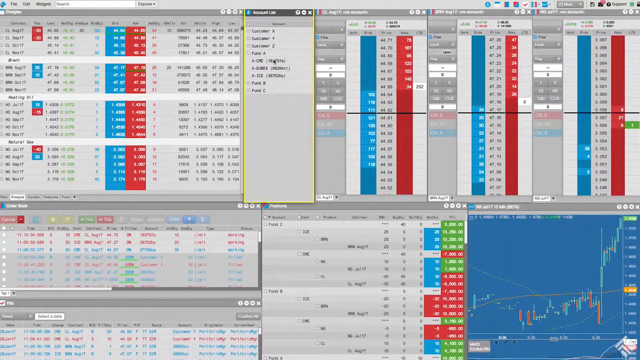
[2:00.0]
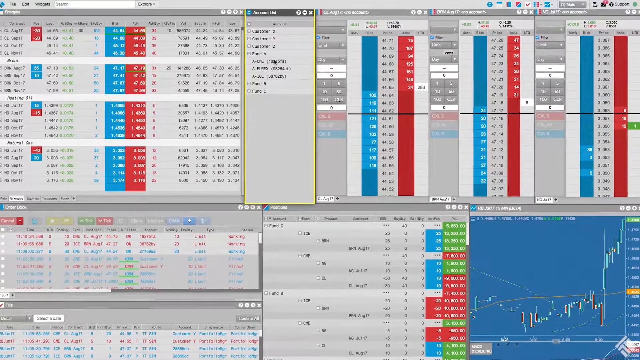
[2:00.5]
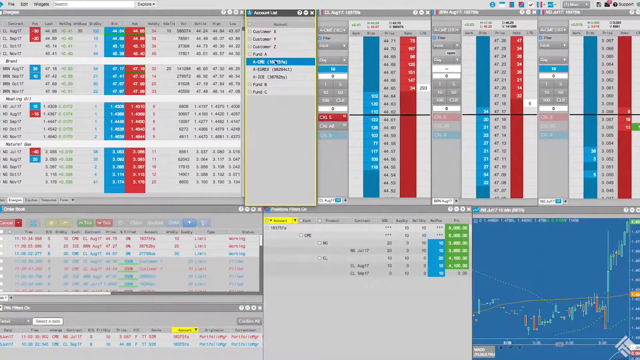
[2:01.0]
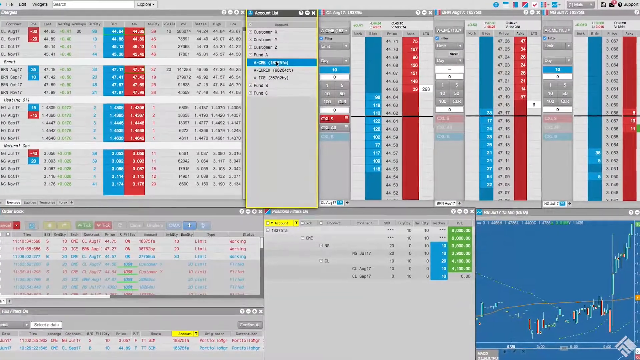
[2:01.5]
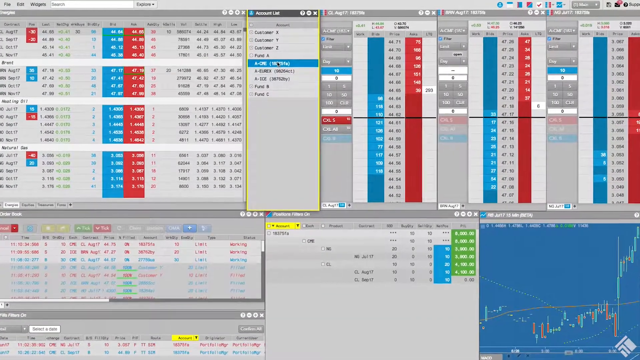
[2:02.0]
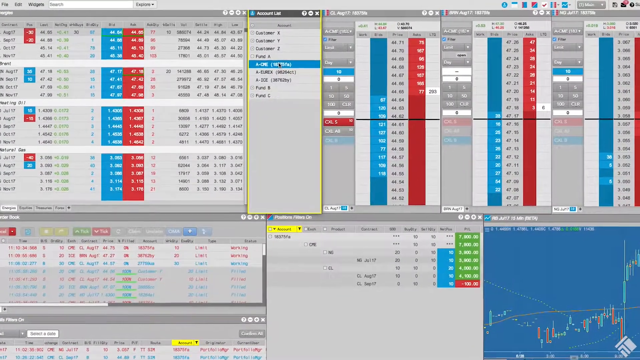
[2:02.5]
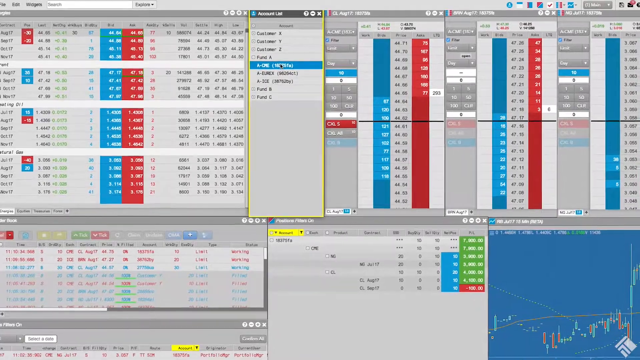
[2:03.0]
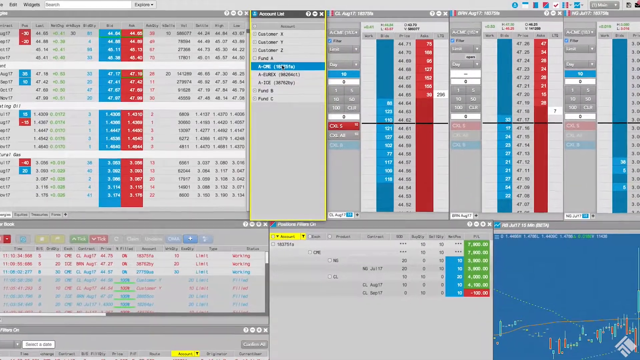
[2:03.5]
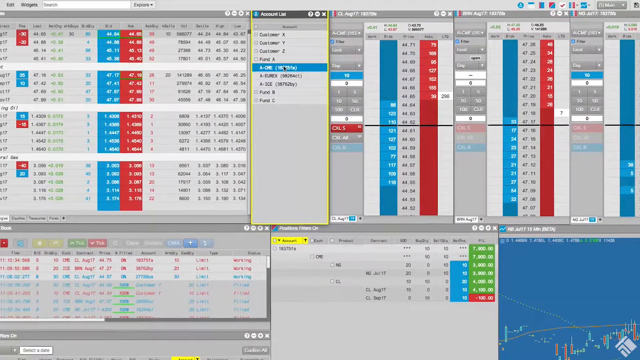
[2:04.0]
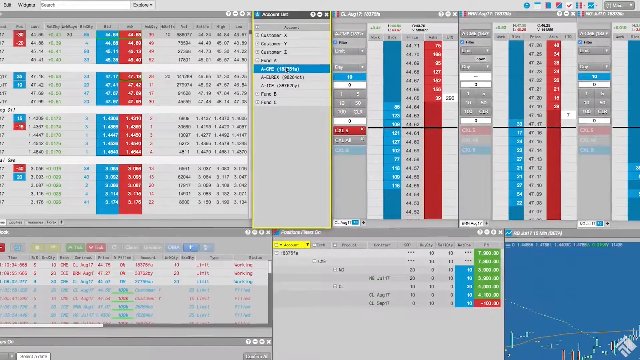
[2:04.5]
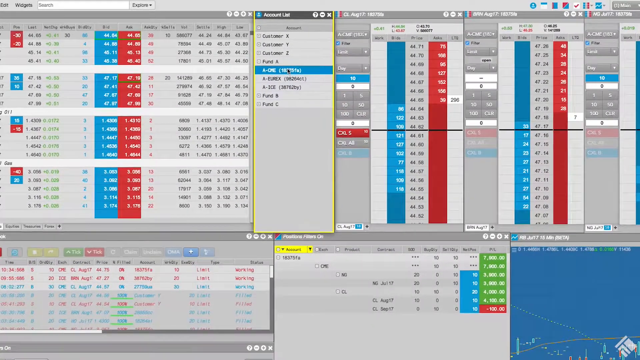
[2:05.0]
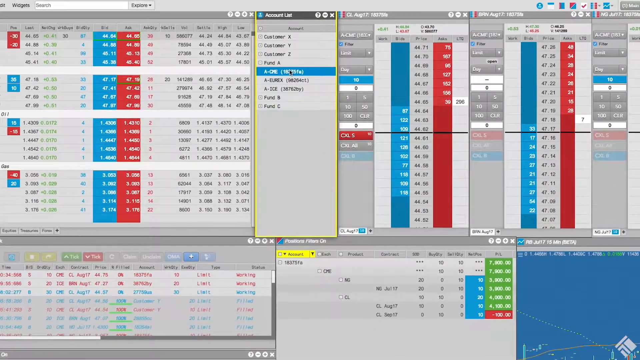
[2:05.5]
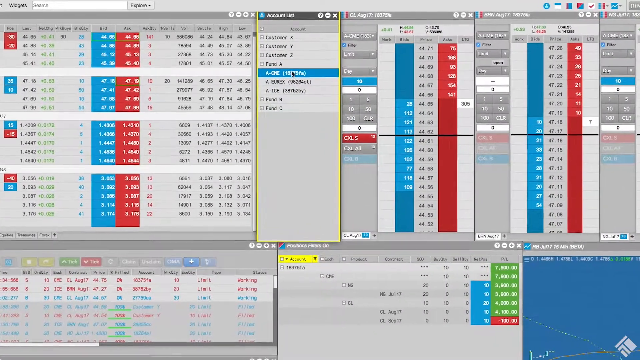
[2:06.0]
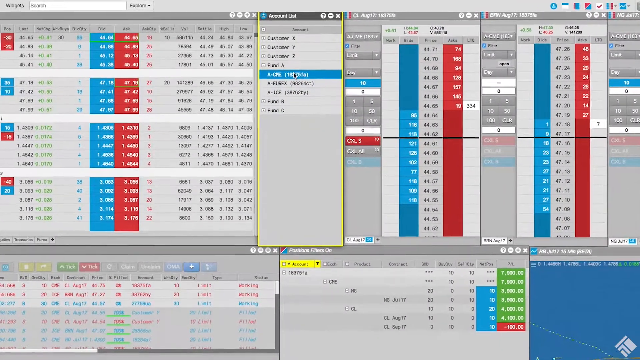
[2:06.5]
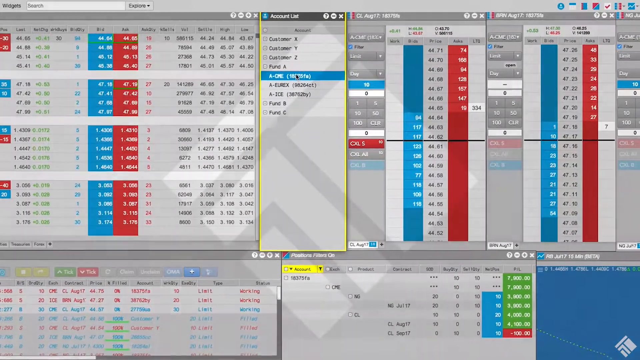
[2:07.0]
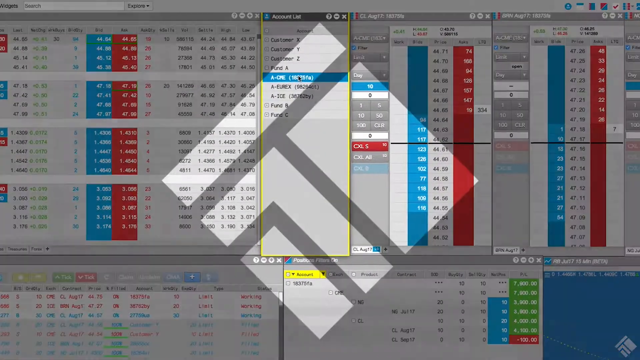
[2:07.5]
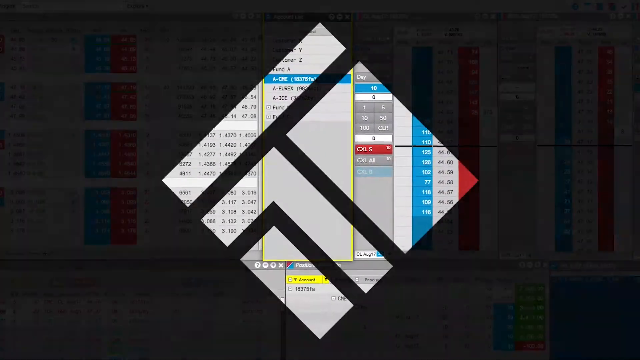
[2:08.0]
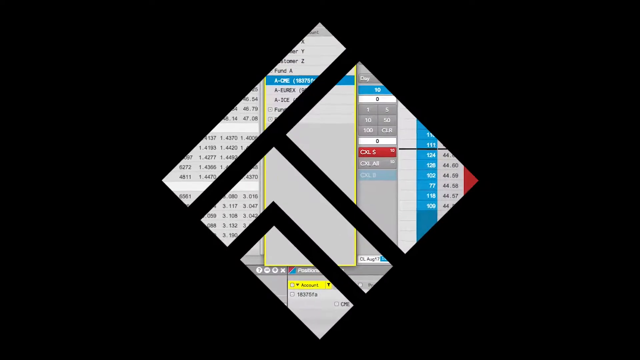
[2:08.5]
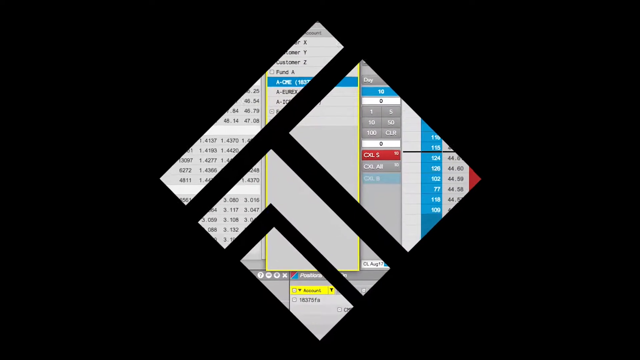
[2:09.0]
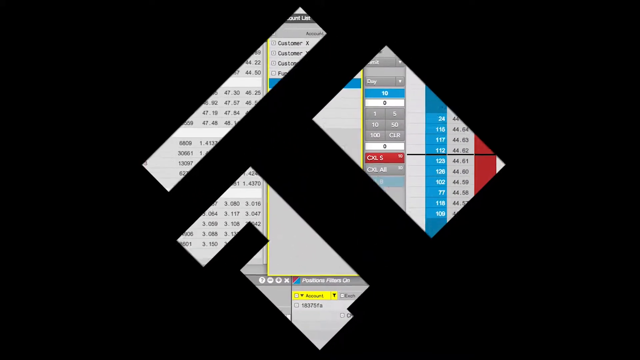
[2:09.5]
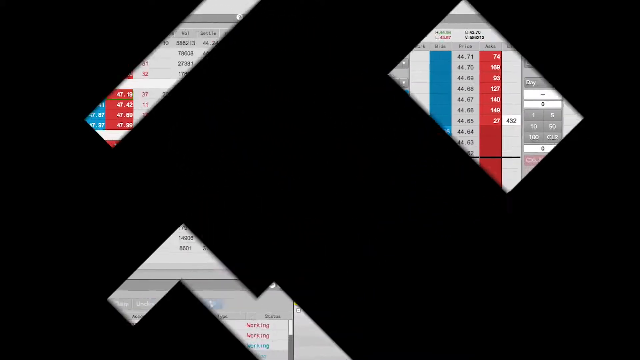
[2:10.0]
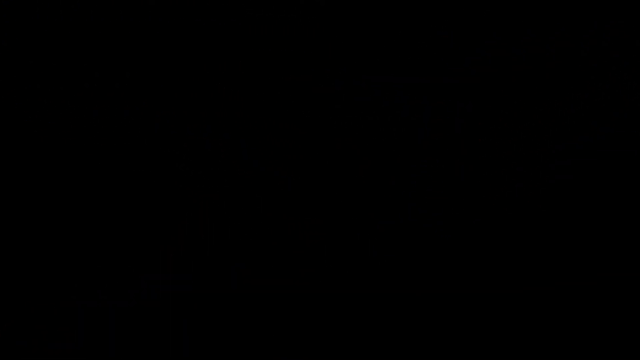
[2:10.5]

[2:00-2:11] A screen capture from someone's computer shows the entire screen covered in open windows, which appear to be some sort of stock market app. They share a color scheme of red, blue, and green on a mostly gray interface or background. One window in the bottom right-hand corner appears to be some sort of graph, instead of the tables of rows and columns the others feature. The view zooms in from the middle, getting closer to the center rectangular box. As it zooms out, a logo transitions in; it appears to be a diamond shape made up of three rectangles, plus one L shape next to a smaller rectangle. The view zooms into the logo, and then it breaks apart.